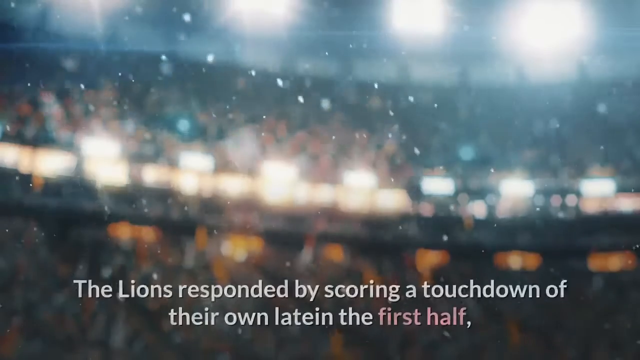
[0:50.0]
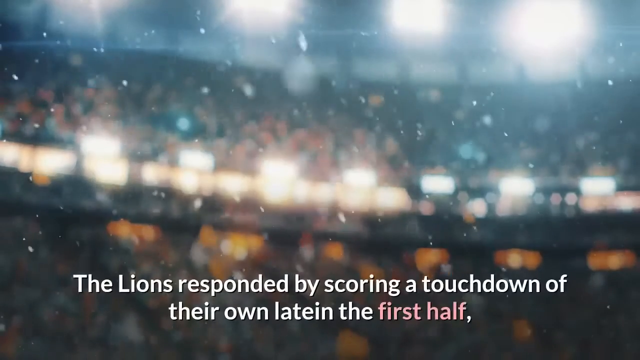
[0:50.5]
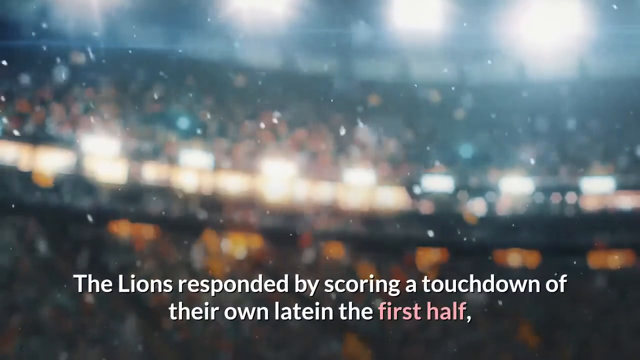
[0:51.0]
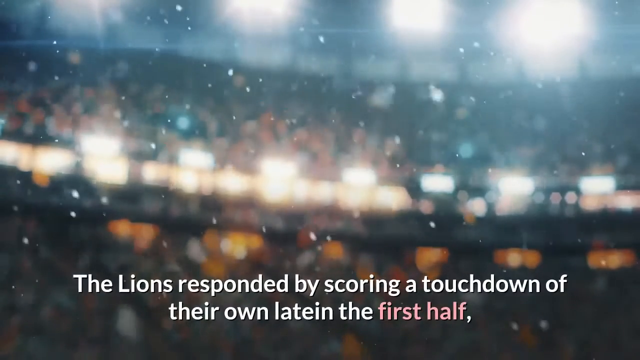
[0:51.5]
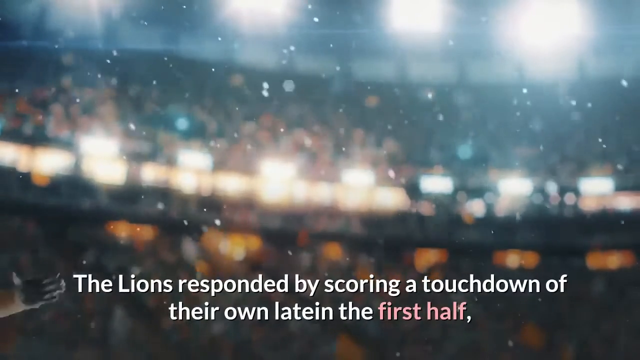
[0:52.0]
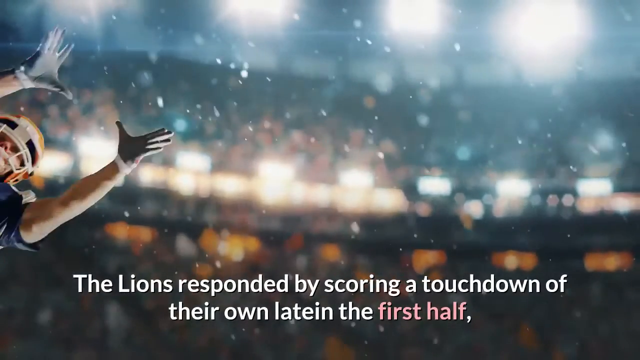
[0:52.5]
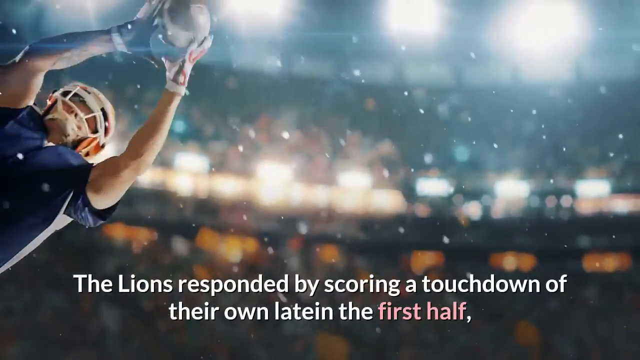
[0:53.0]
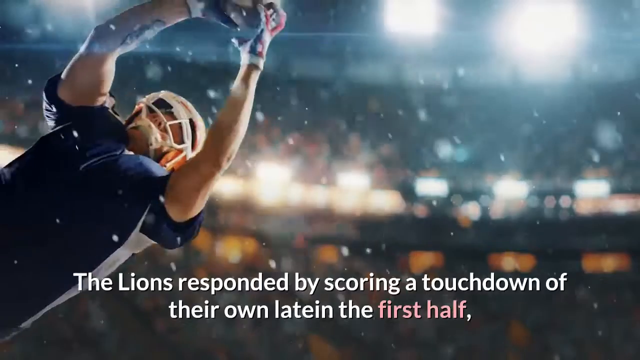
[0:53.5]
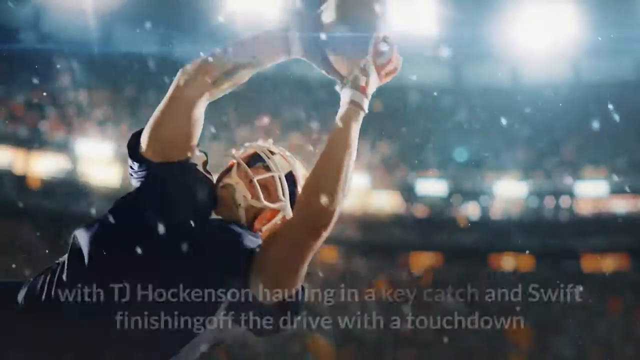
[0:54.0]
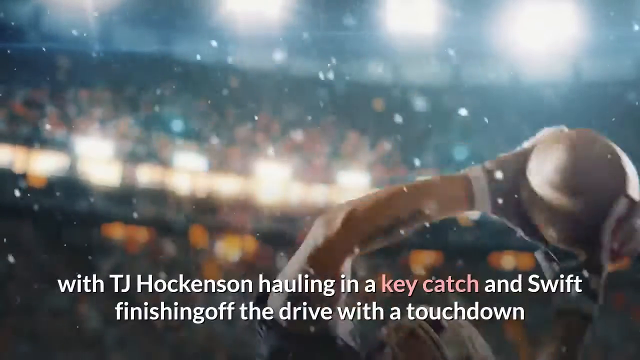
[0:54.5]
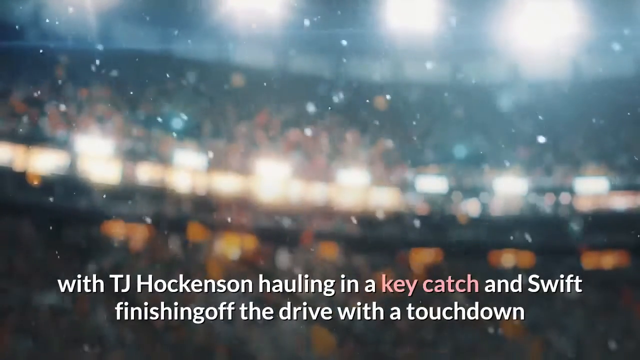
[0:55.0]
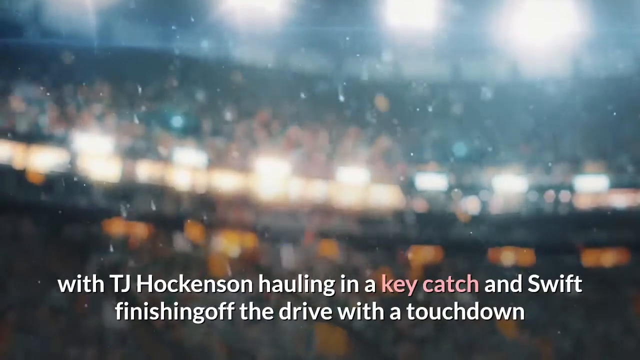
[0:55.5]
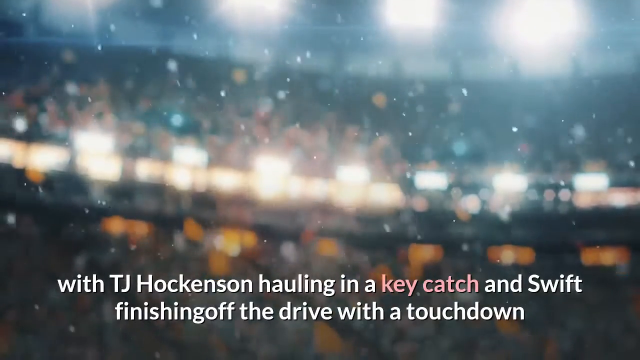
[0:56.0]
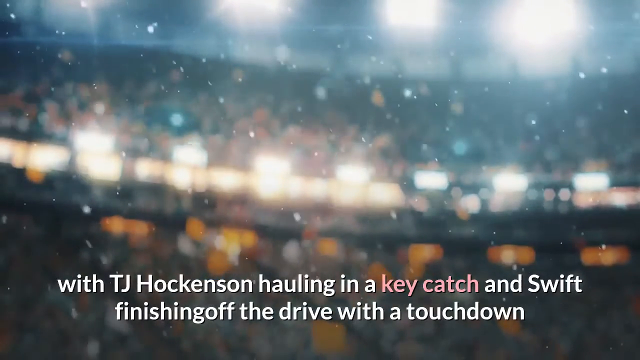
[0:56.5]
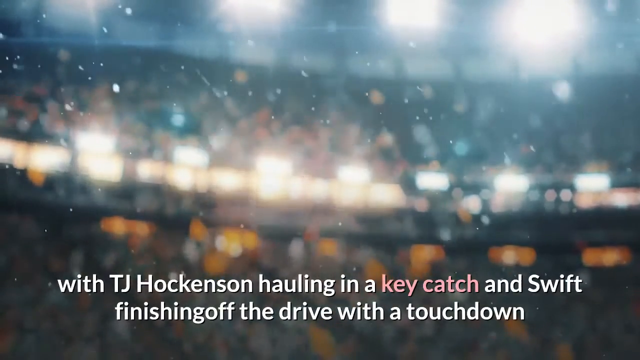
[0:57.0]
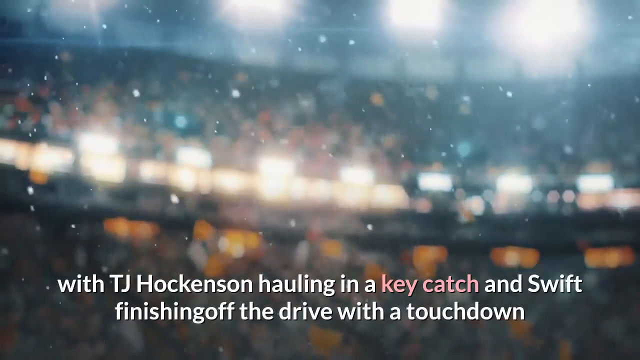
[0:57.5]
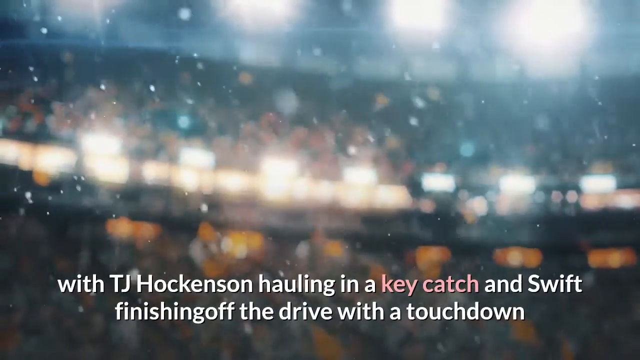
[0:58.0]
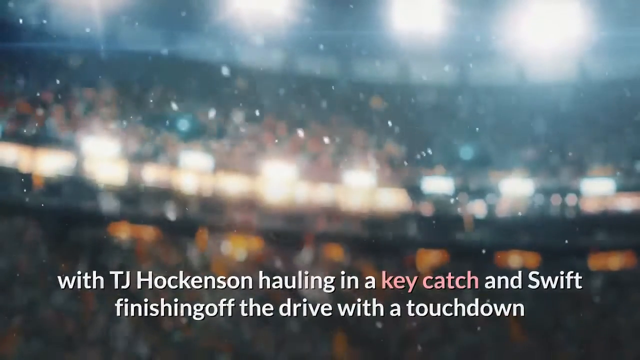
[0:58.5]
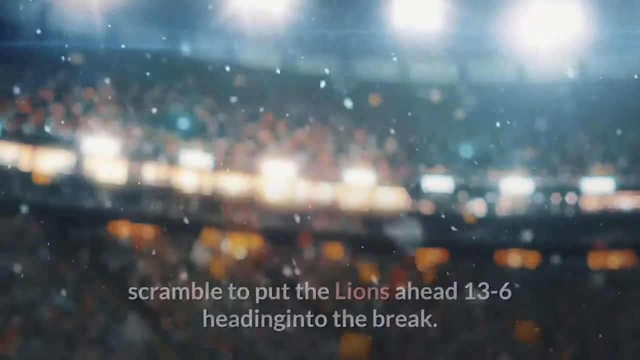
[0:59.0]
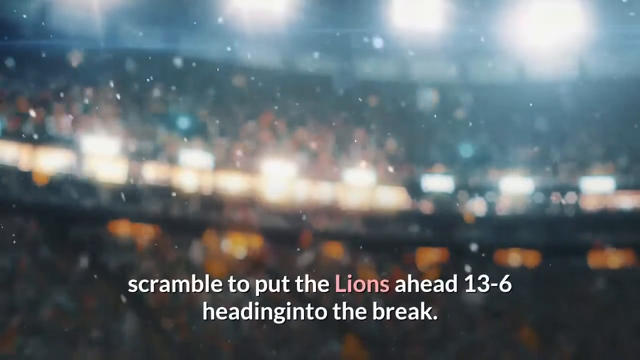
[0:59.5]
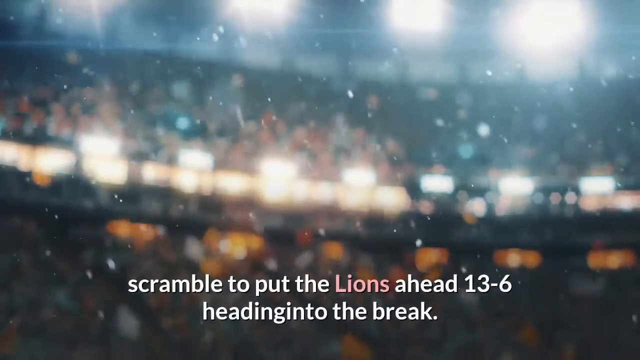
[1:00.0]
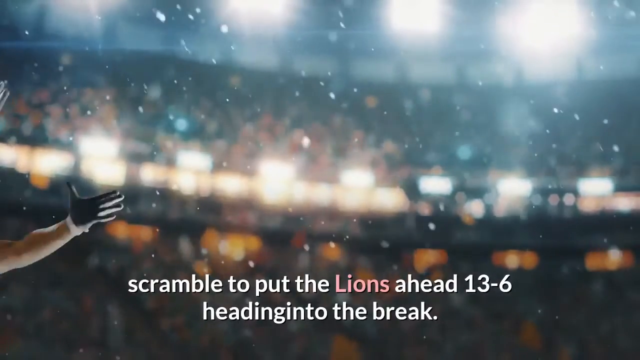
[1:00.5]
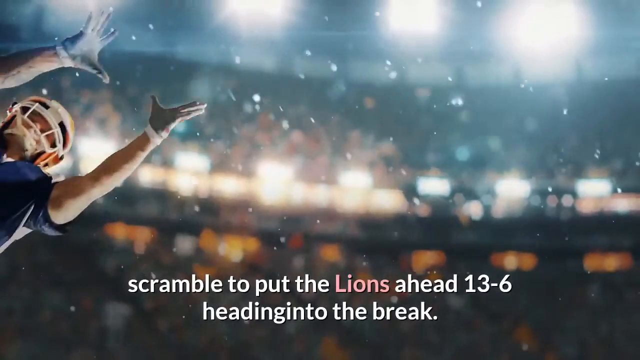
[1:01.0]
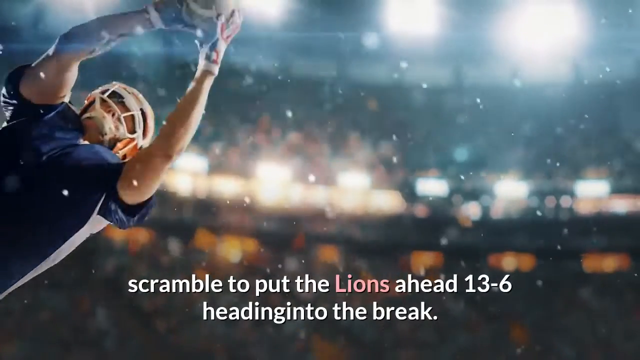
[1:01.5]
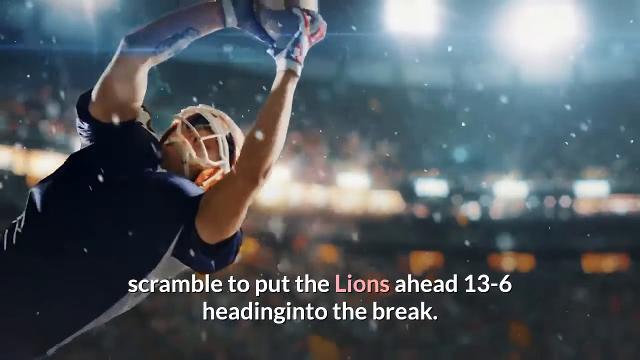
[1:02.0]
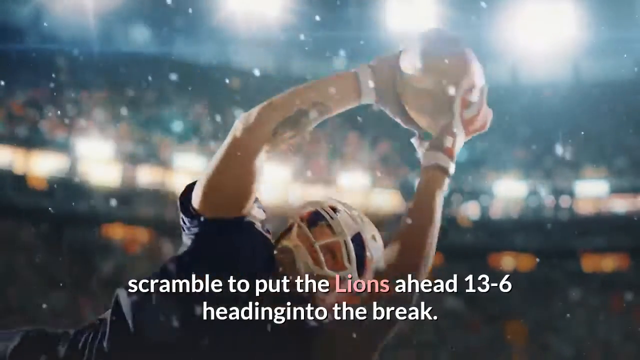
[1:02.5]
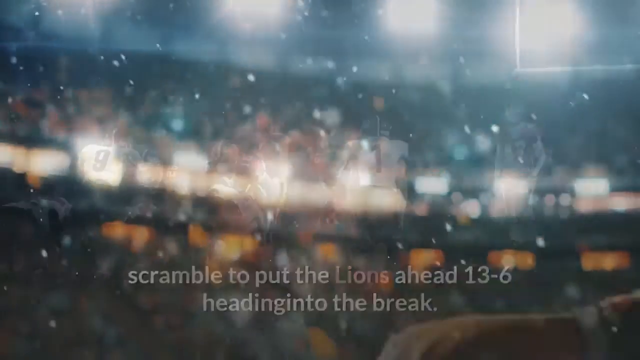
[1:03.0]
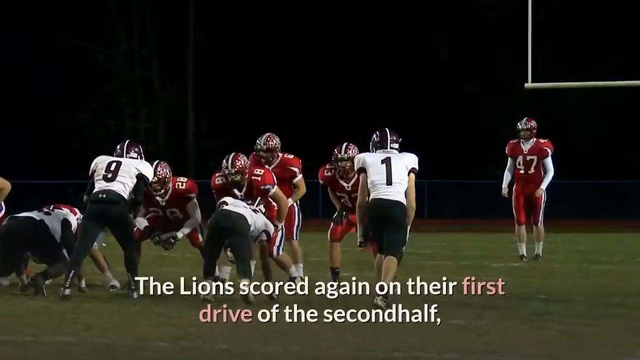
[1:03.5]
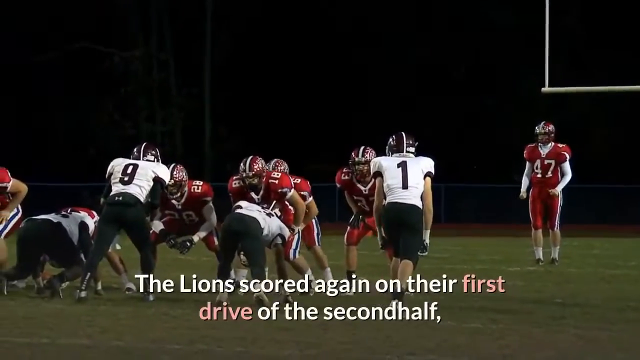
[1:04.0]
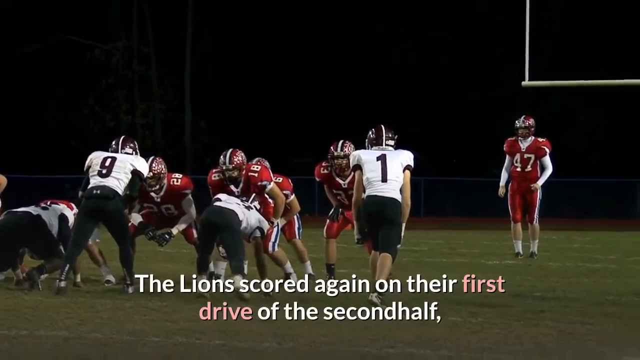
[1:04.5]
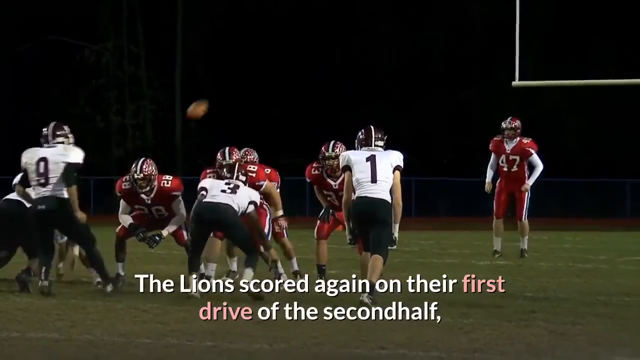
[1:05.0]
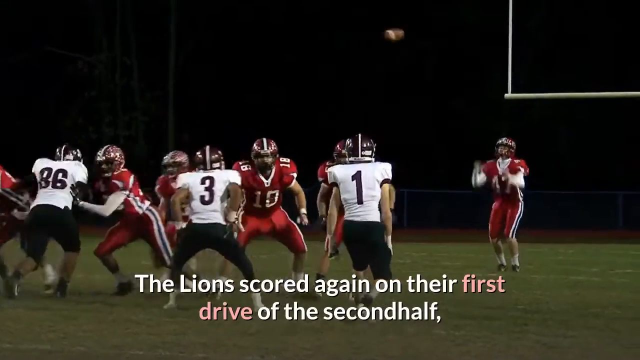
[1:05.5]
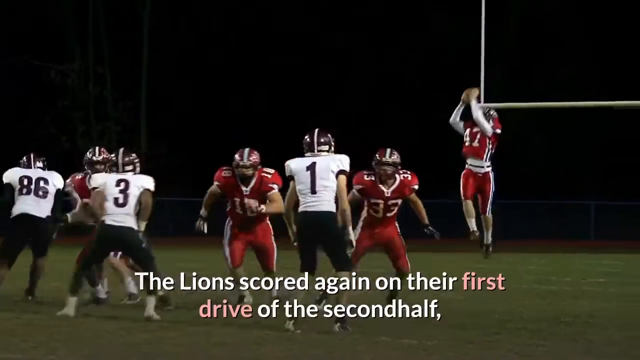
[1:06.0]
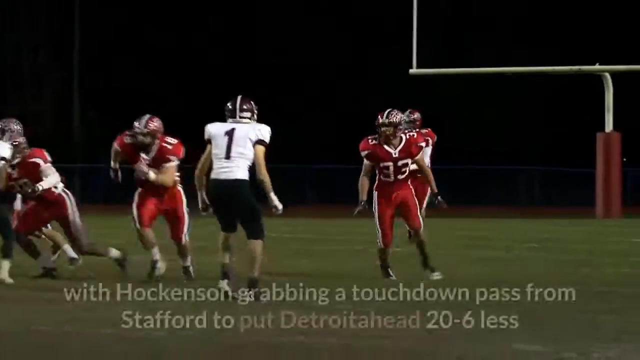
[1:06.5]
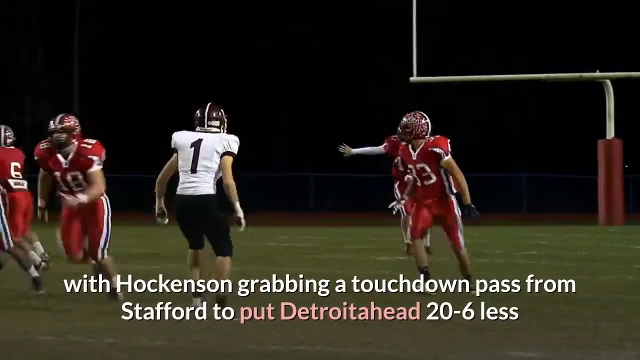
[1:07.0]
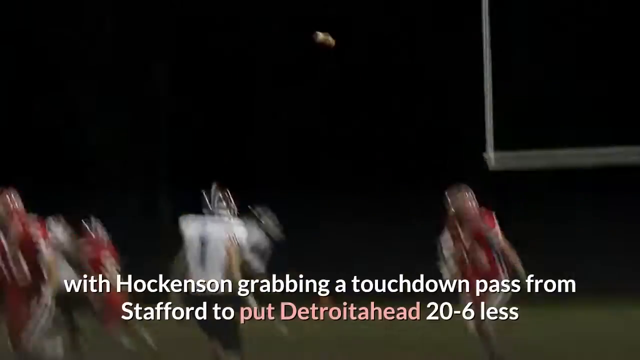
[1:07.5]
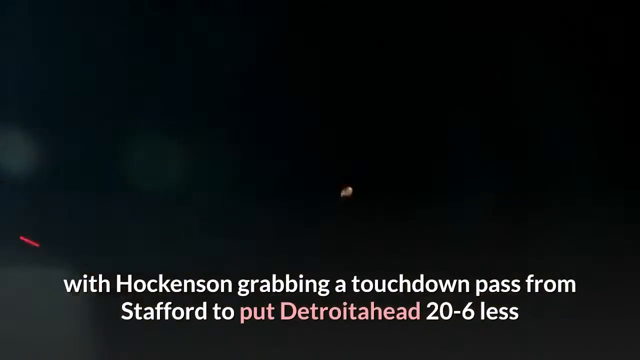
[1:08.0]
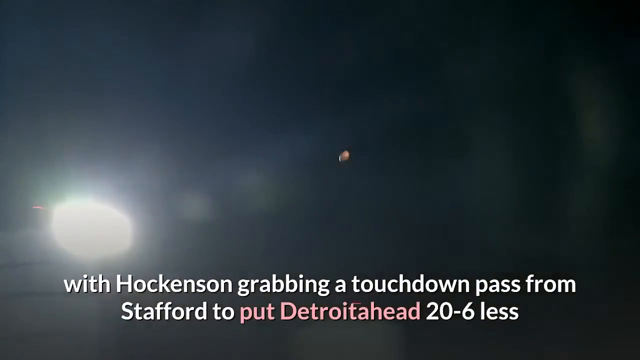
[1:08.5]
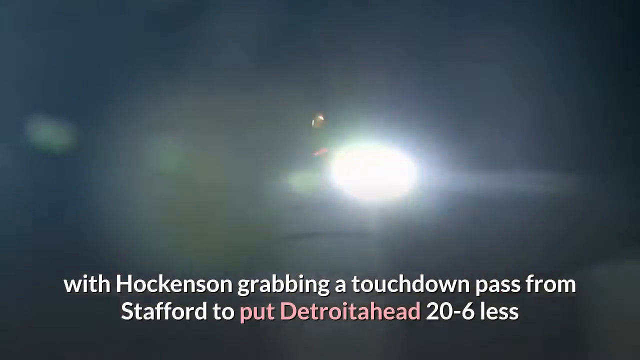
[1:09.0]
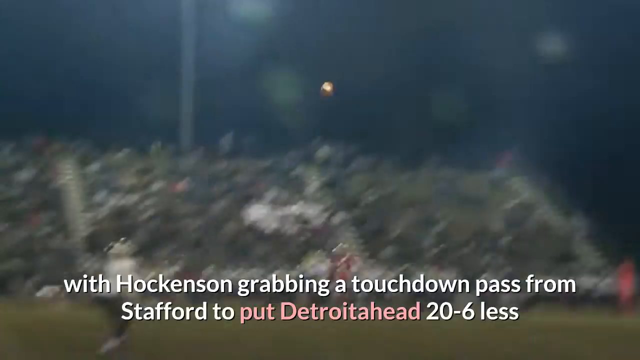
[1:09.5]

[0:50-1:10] An American football player in a blue jersey and a red helmet dives to catch the ball with his hands against a blurry background of the field, stadium or arena; he catches the ball and falls. It is drizzling, with small objects falling that seem to be snow. Text at the bottom reads "the Lions responded by scoring a touchdown of their own" and mentions a scramble "to put the Lions ahead." The next shot shows a red team and a white team playing American football at night. The ball is thrown up and caught by a red team player. The red team wears white long-sleeve shirts with red jerseys over them, and the white team wears white jerseys and black pants with long-sleeve shirts underneath. Text at the bottom reads "the Lions scored again on their first drive of the second half."